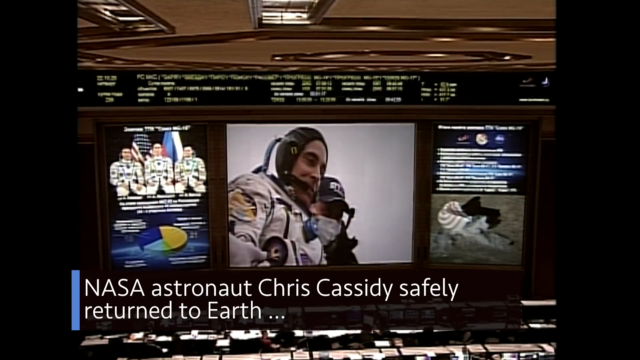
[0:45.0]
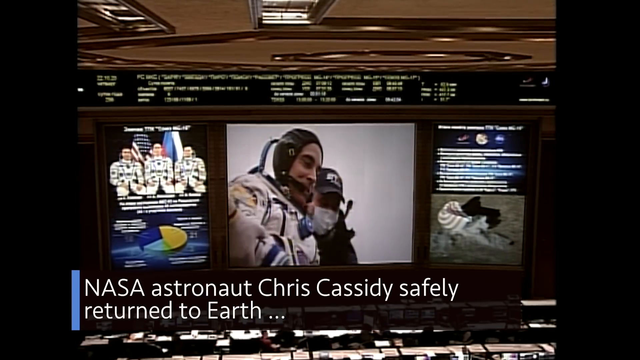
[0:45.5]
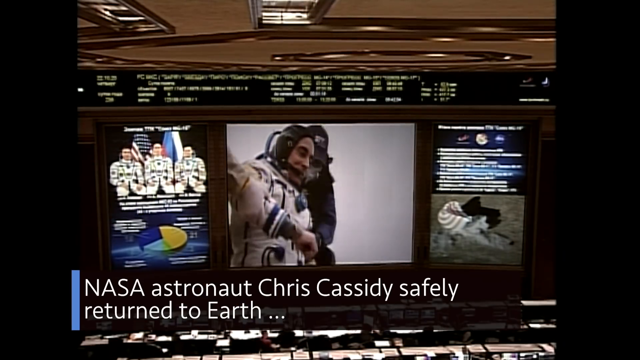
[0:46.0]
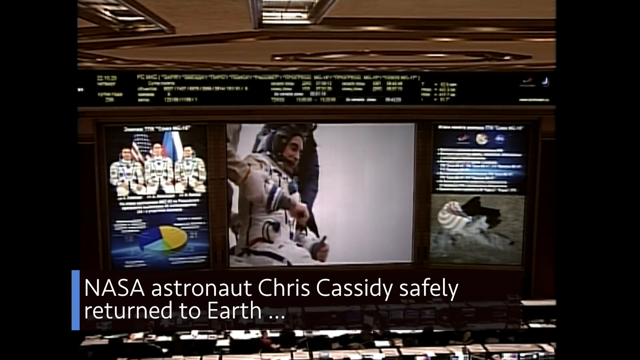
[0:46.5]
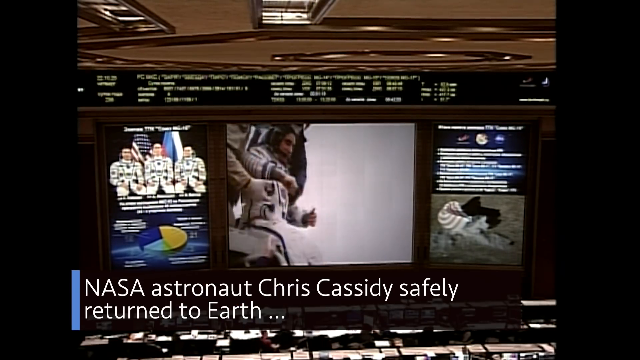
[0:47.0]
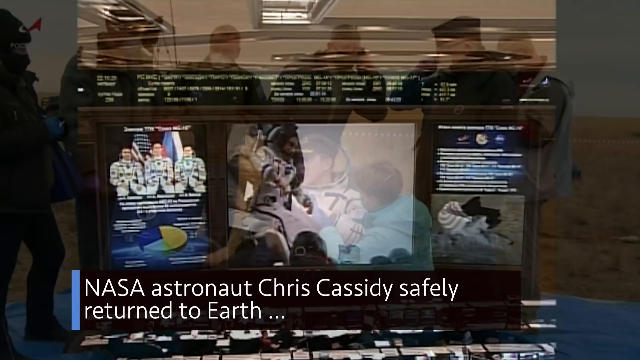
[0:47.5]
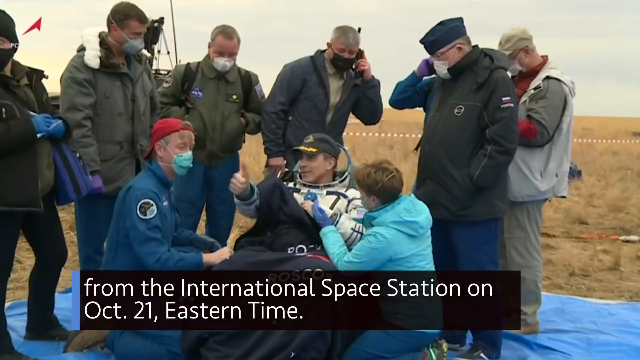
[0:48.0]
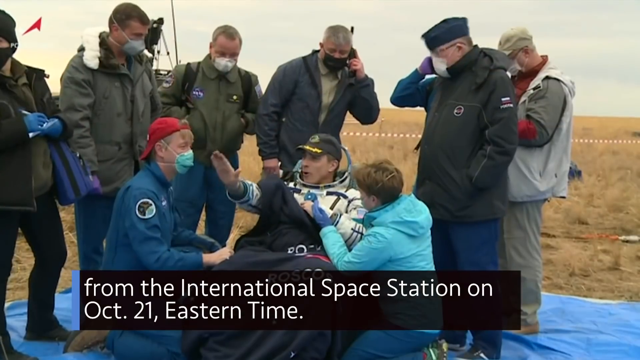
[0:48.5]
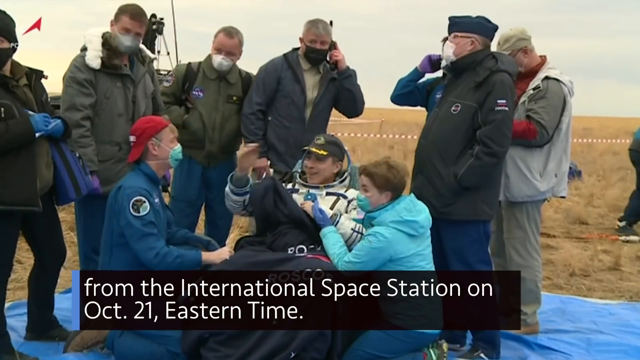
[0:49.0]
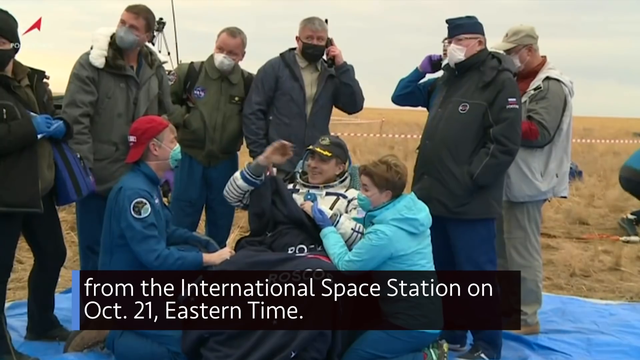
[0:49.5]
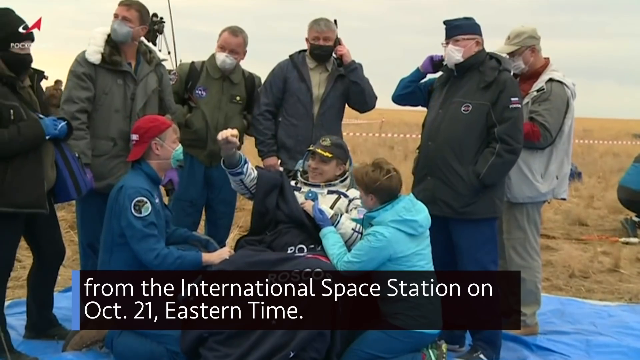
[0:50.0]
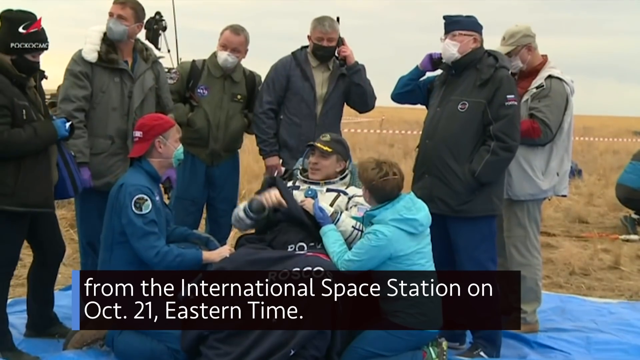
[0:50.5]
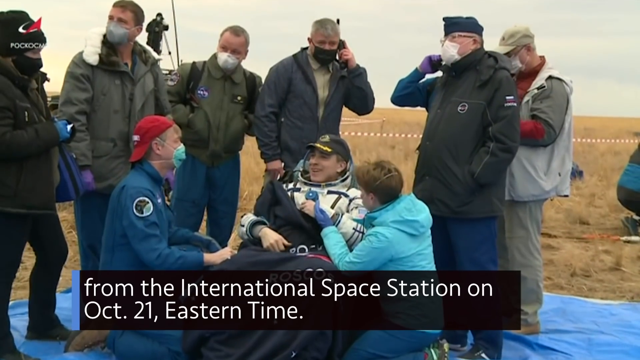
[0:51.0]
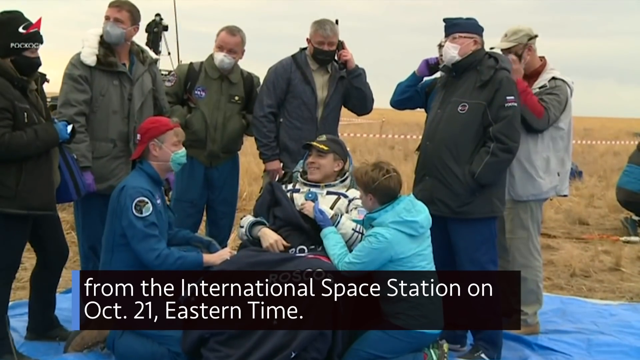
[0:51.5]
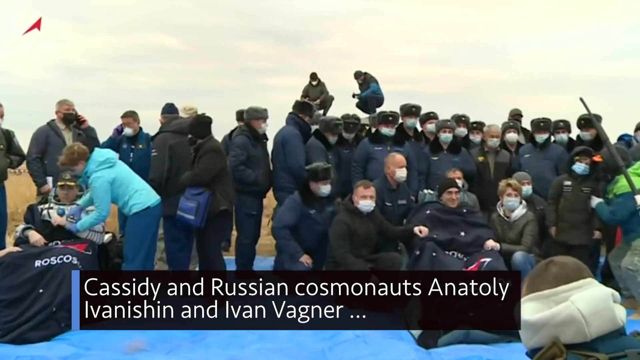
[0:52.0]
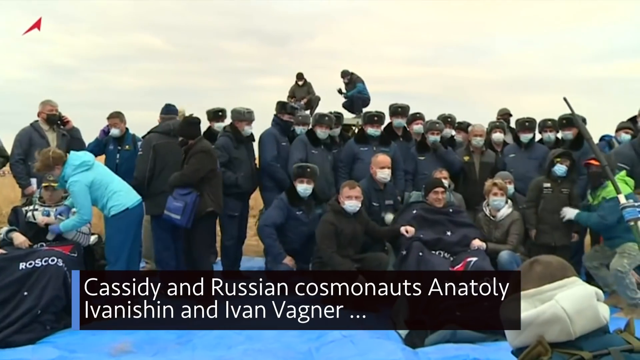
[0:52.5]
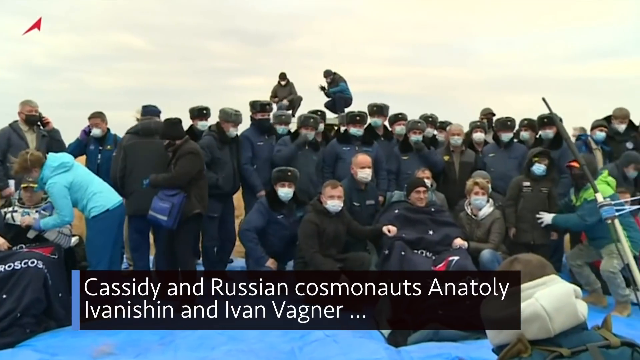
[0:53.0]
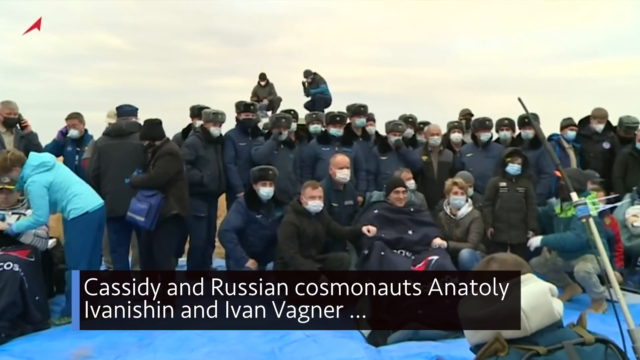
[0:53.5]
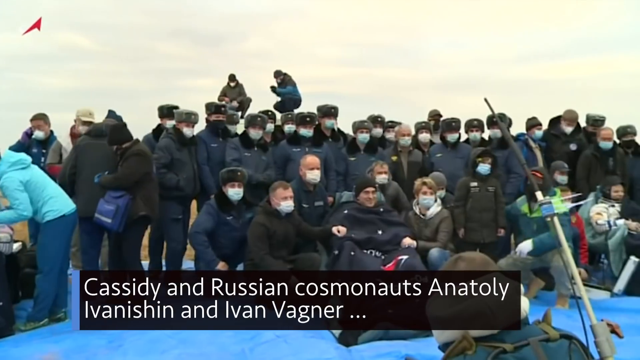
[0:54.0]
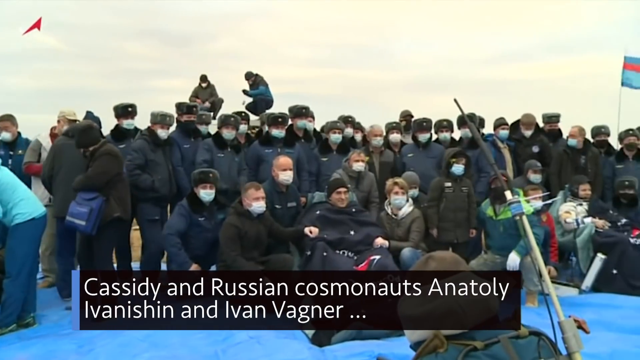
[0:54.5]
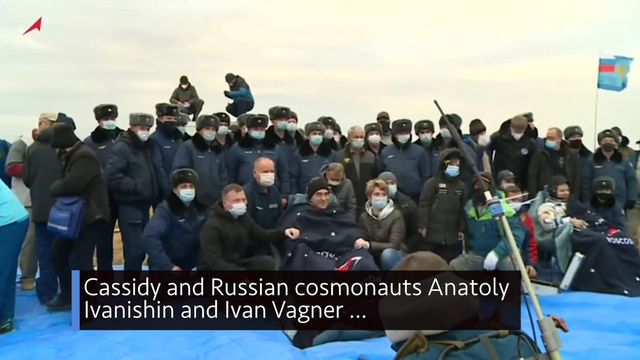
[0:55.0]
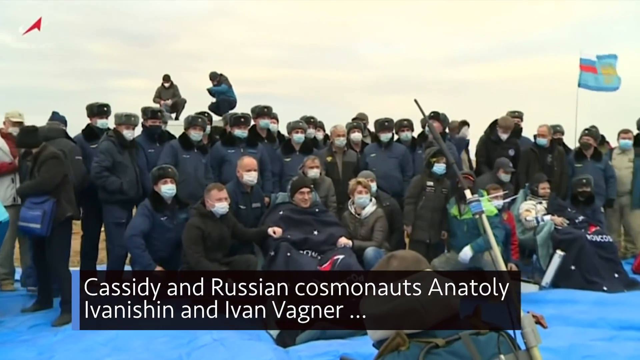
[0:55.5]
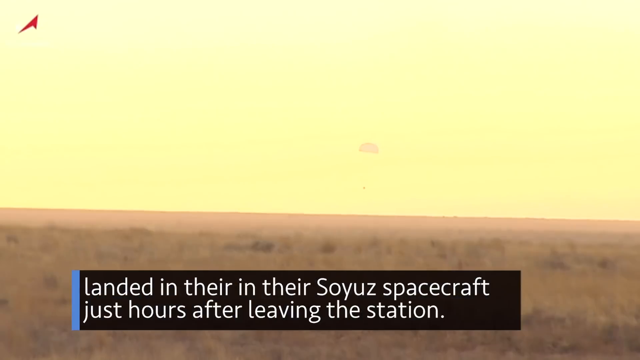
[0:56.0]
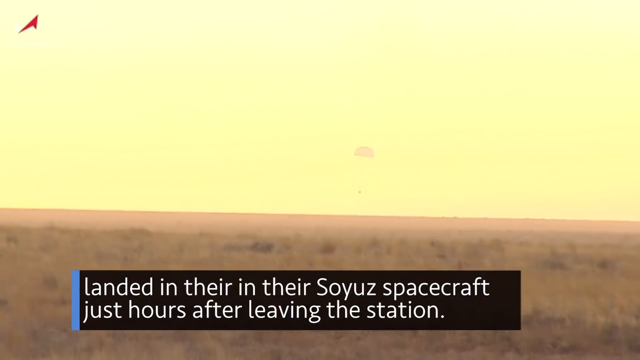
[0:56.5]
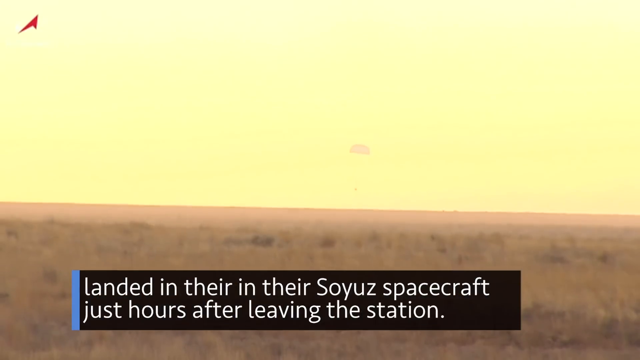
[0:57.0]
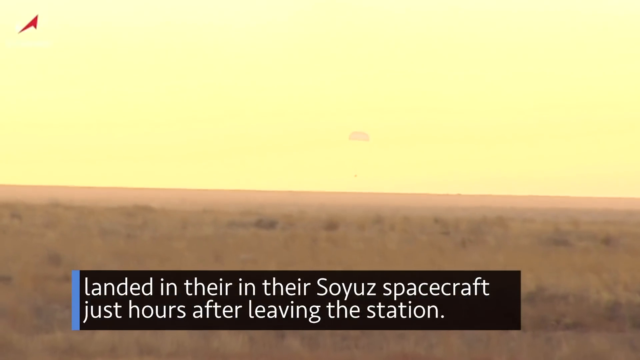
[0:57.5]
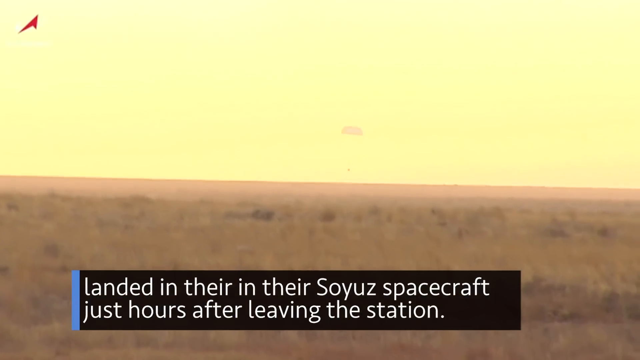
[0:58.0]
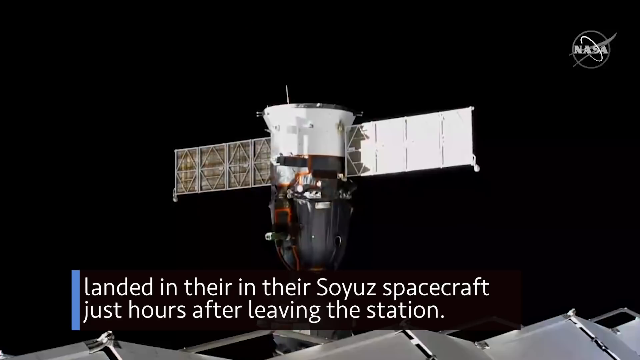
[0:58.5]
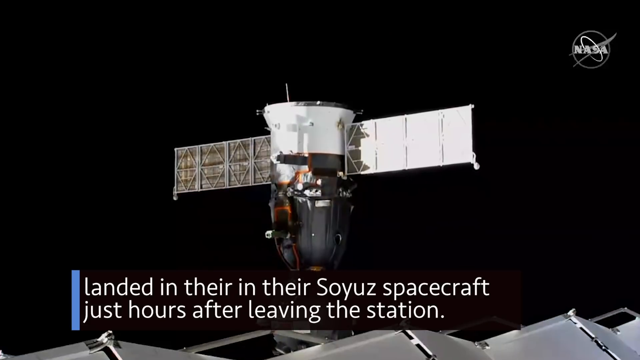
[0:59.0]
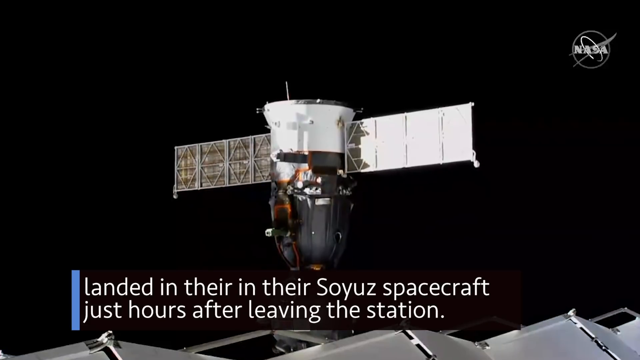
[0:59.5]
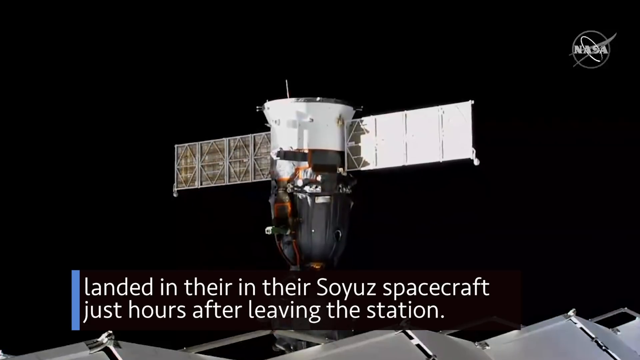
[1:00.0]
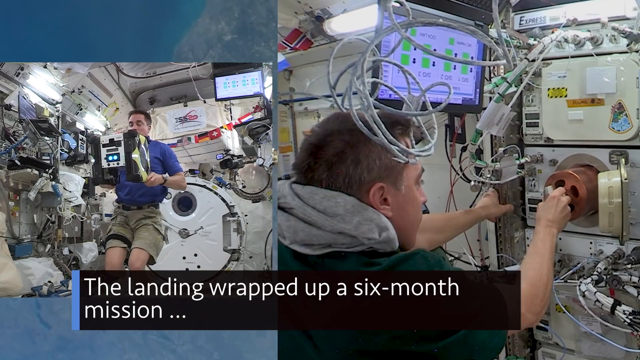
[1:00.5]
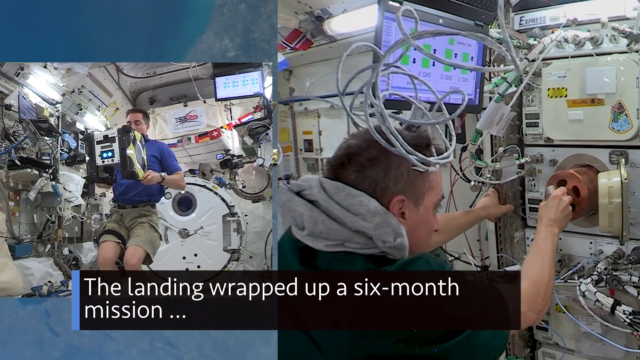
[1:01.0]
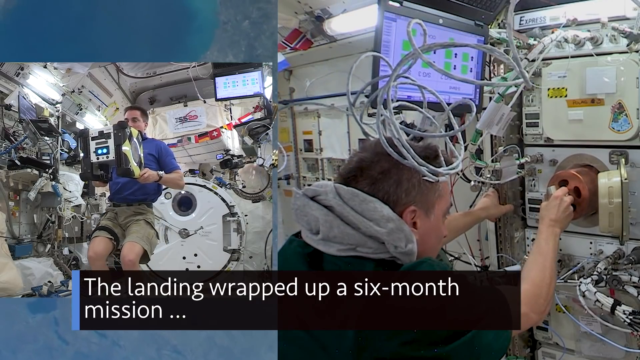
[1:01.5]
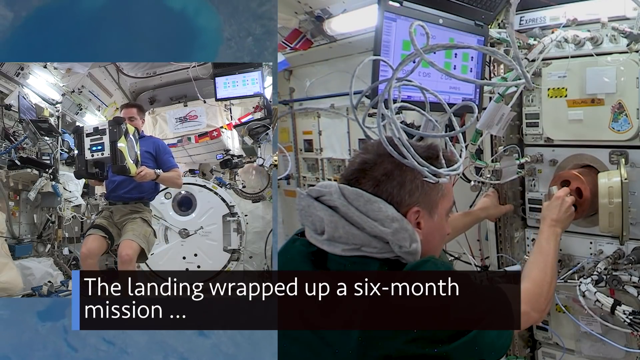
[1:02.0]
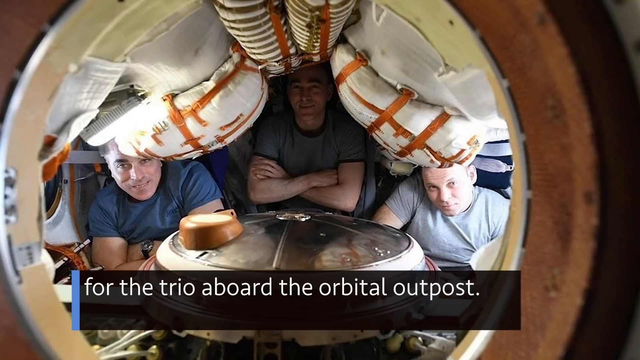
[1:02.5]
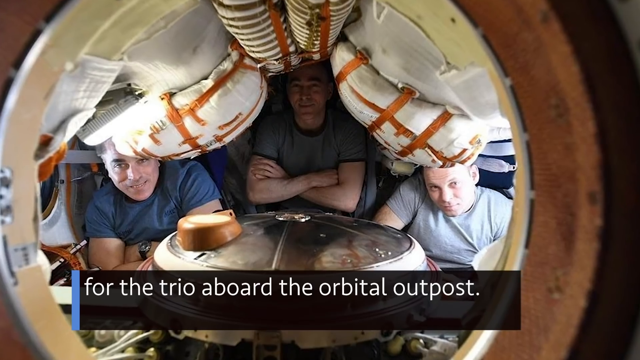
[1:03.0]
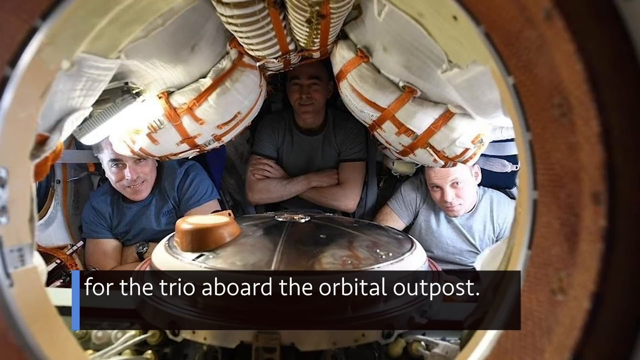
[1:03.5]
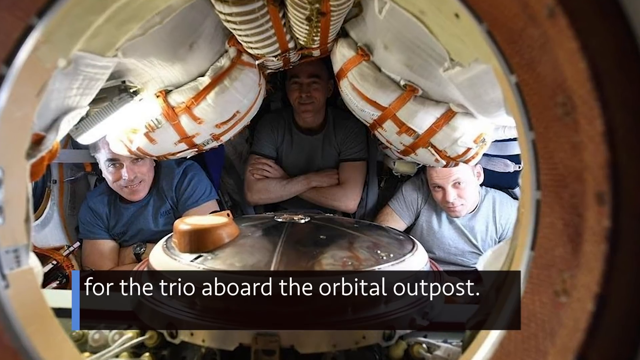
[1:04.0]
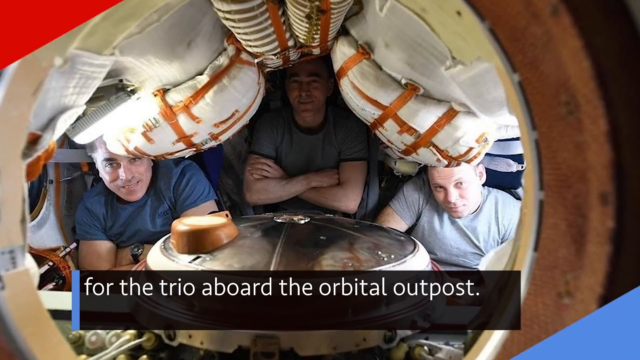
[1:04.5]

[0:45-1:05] The astronauts who went to collect samples from the asteroid are safely on the ground on Earth, with a crowd of people standing around them celebrating. Photos show the astronauts inside the spaceship, which looks very crowded, with three men sitting very close together in a small space. One caption says the mission took only a few hours to get back to Earth. An image shows one of the astronauts being helped and carried off the spaceship after returning to Earth, and a few images show two astronauts working inside the spaceship on what looks like mechanical equipment. The astronaut on the ground looks very happy and salutes the people in the crowd.